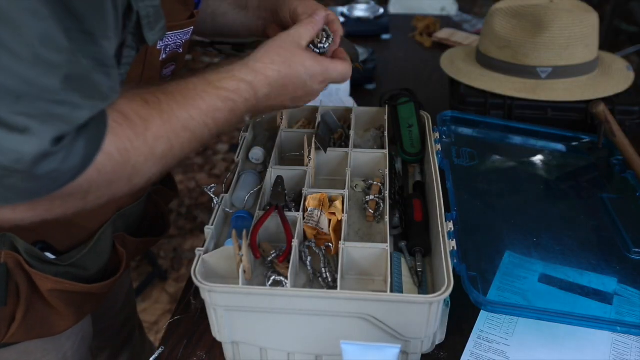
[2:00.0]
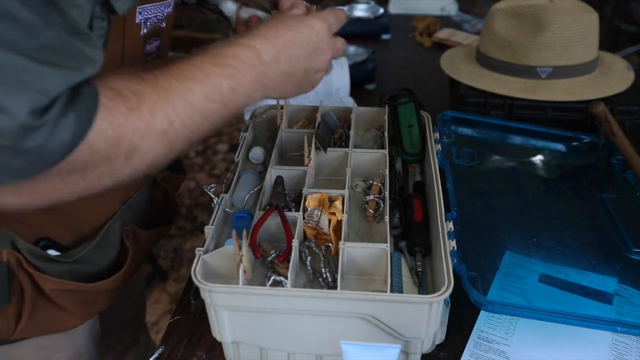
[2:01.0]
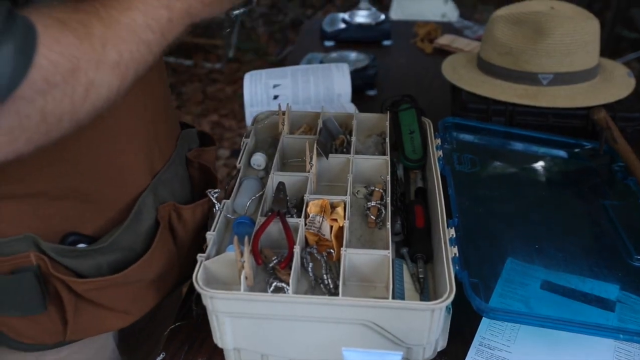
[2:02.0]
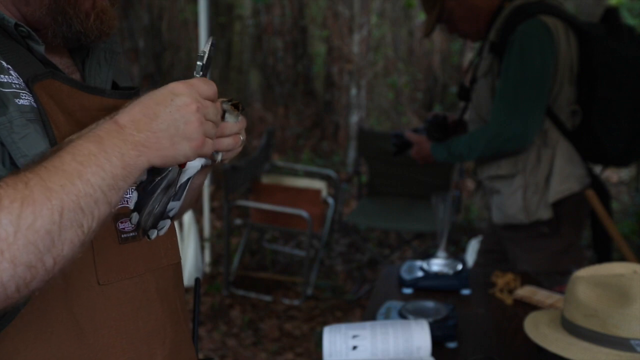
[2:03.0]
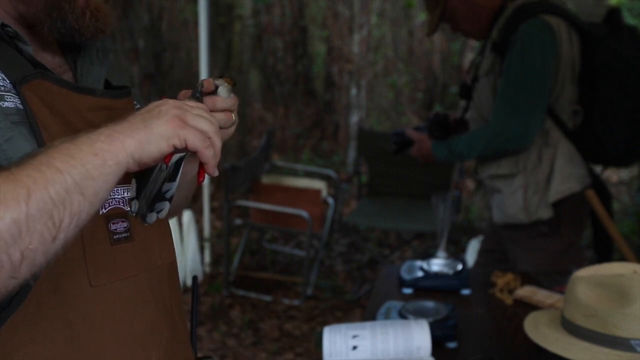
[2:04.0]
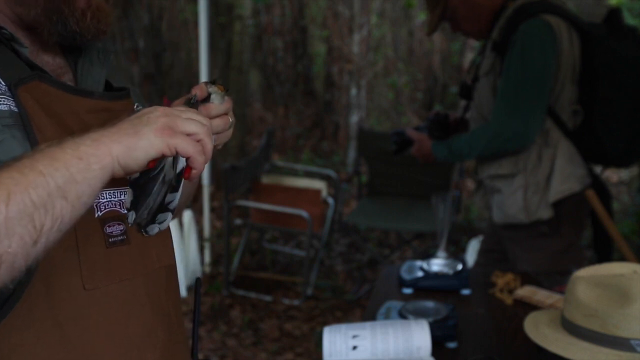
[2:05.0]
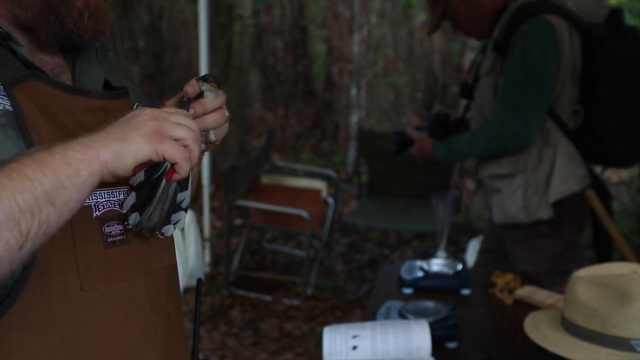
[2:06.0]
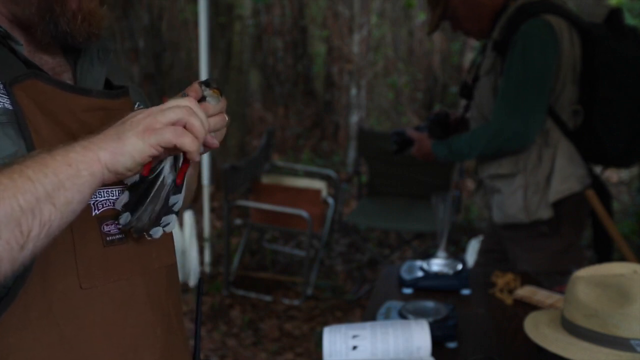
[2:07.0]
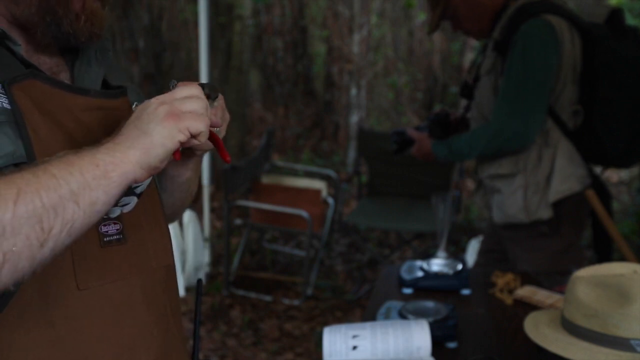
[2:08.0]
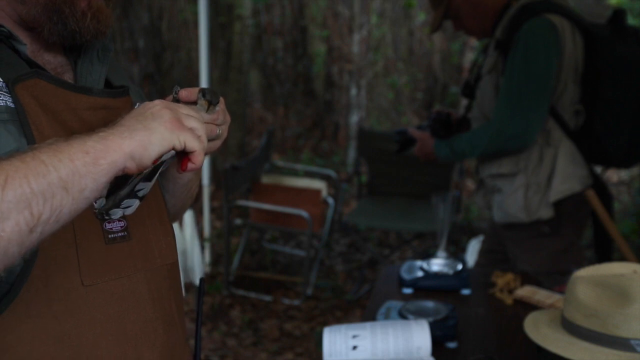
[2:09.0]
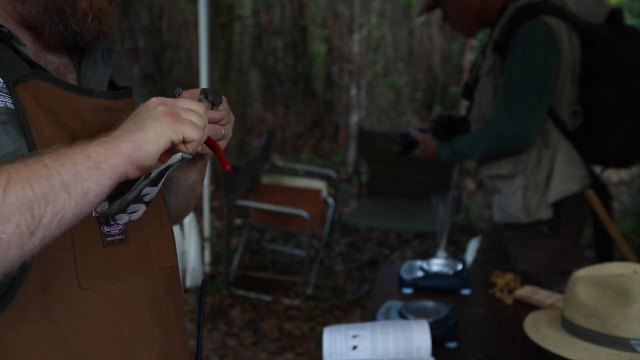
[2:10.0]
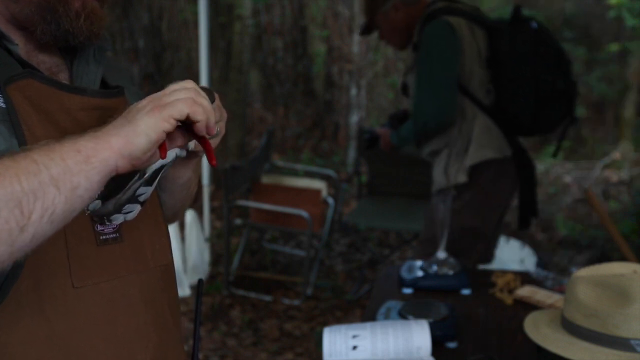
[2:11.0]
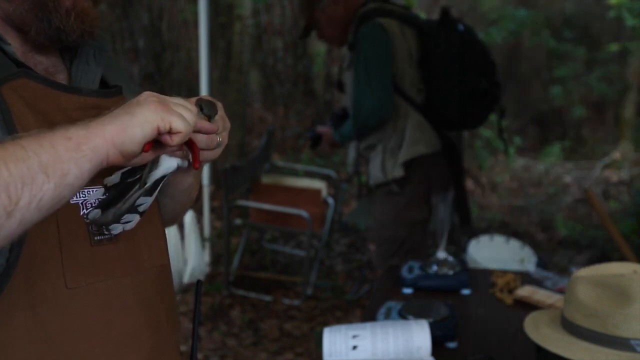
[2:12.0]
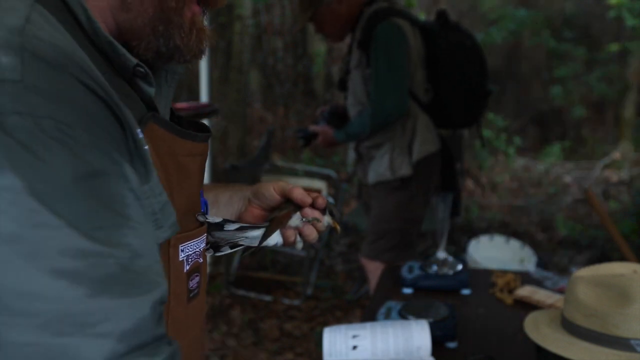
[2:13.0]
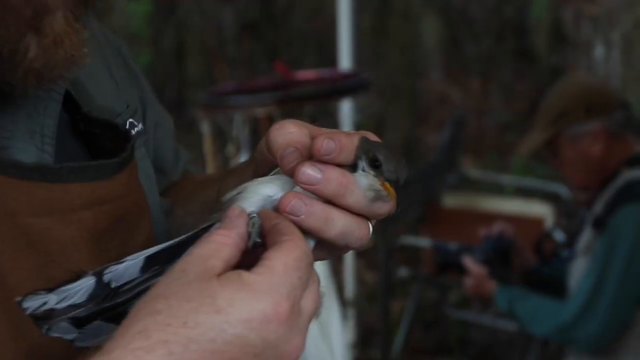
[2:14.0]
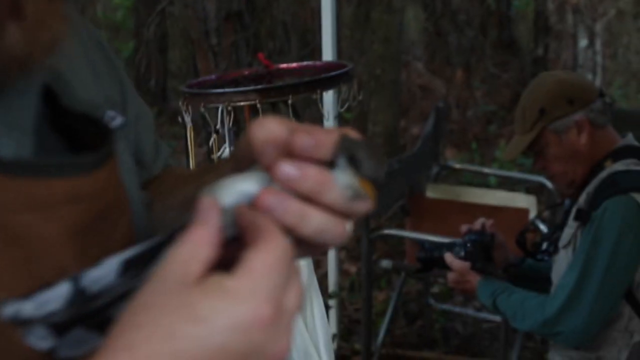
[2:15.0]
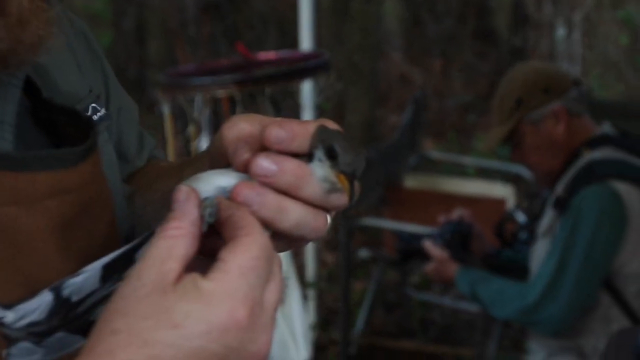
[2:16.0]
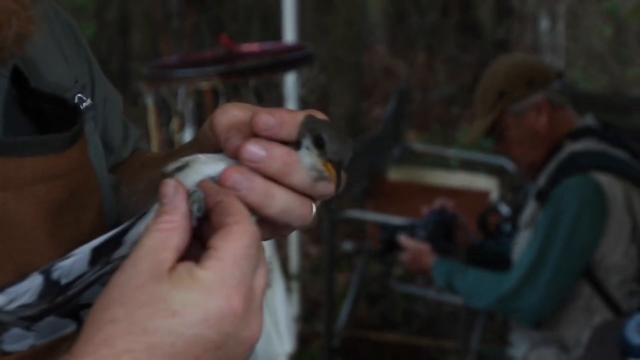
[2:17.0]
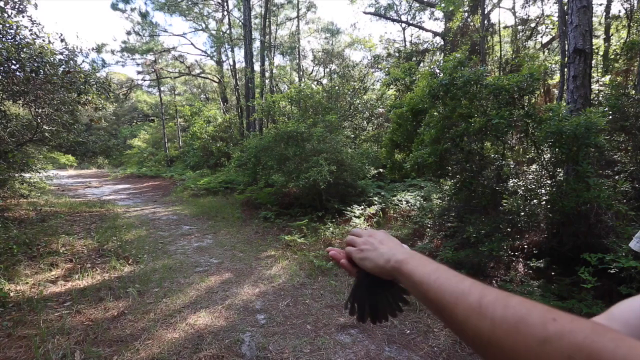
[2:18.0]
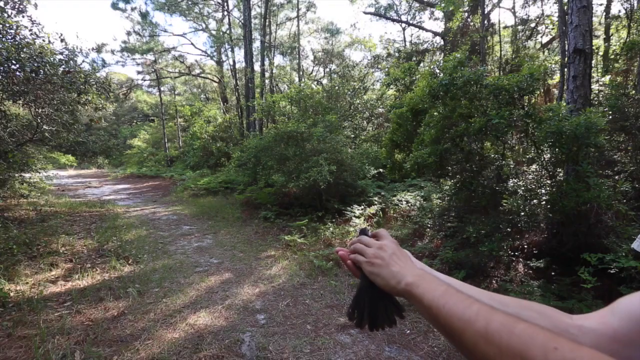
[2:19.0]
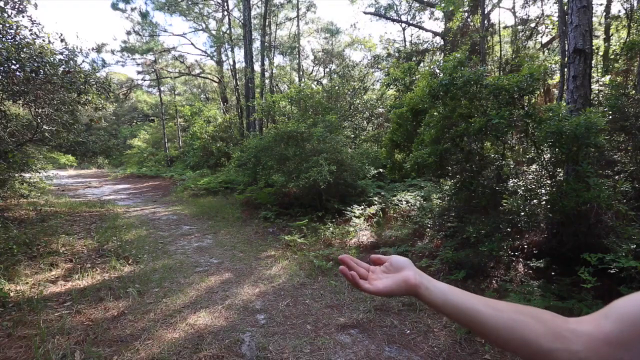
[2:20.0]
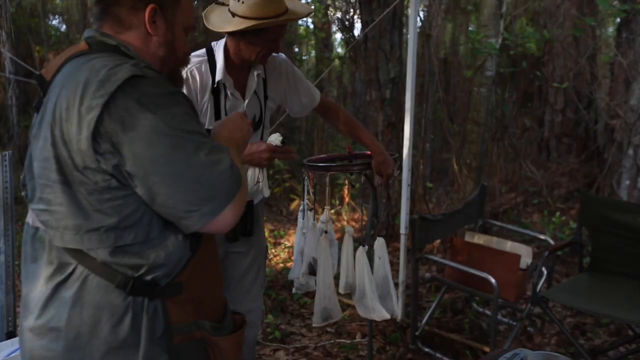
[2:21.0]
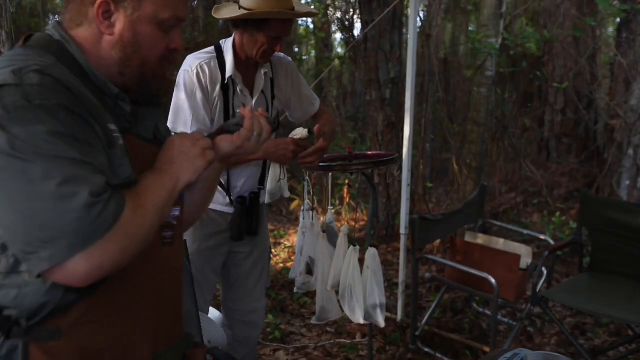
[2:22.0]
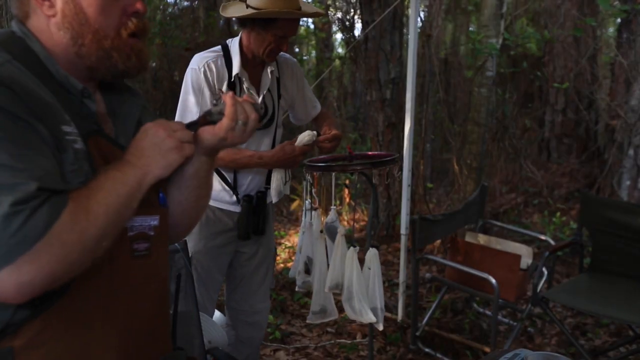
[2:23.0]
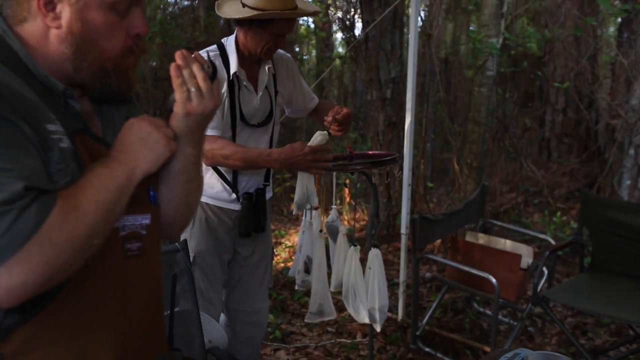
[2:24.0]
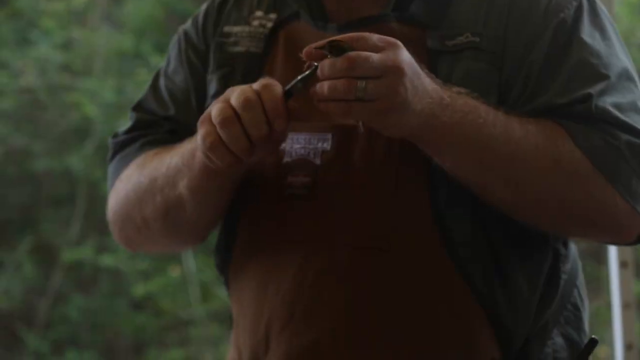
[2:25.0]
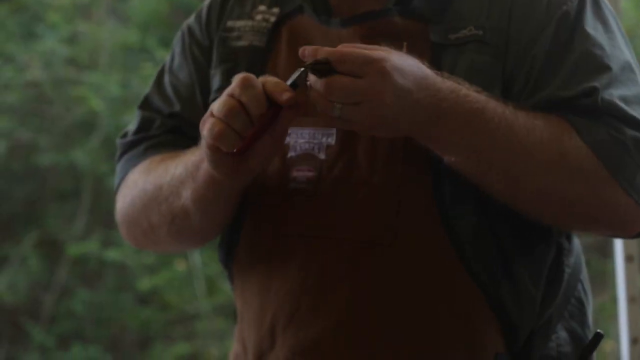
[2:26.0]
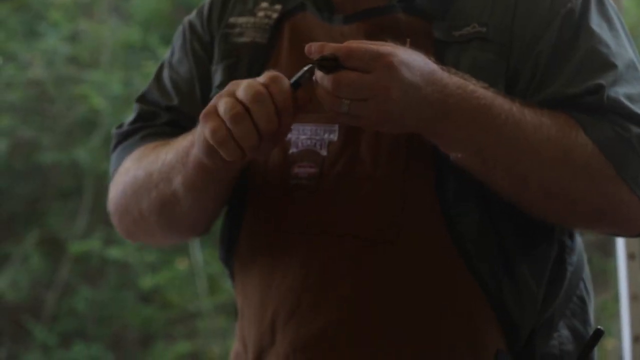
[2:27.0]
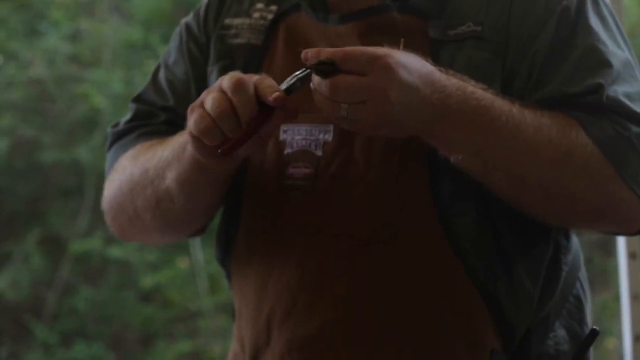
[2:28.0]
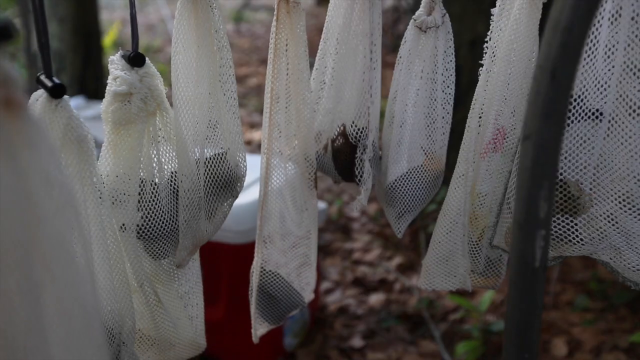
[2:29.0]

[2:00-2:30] They fetch something from the box. A man cuts something, then waits at another bird. They seem to be treating the birds. Other doctors have their birds. One doctor lets a bird fly, and it flies off.